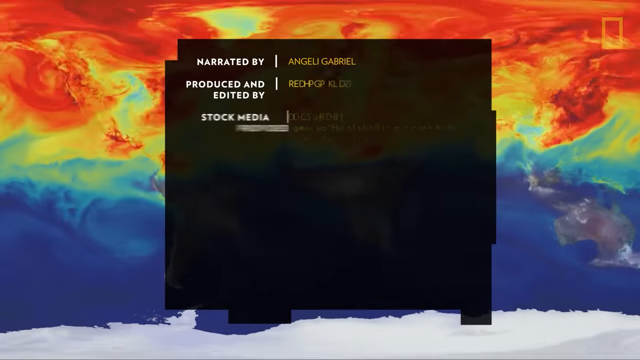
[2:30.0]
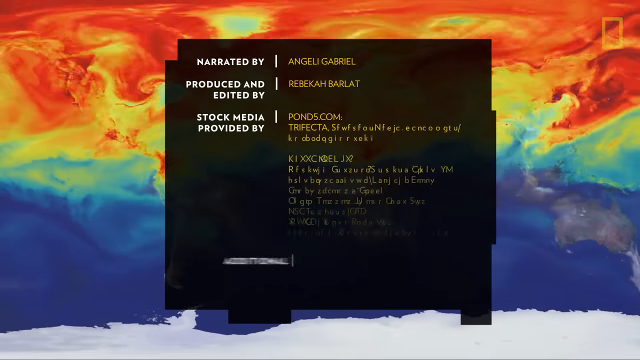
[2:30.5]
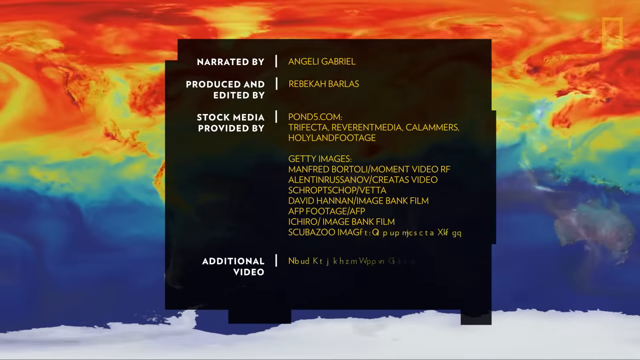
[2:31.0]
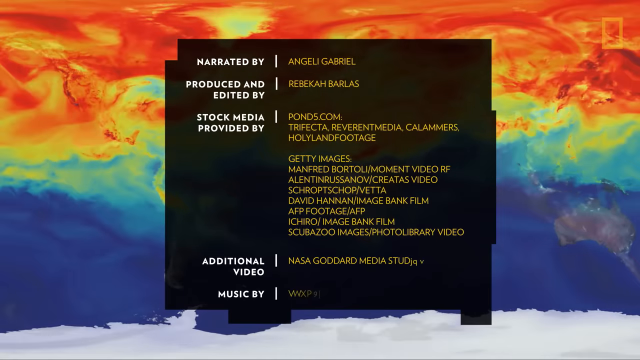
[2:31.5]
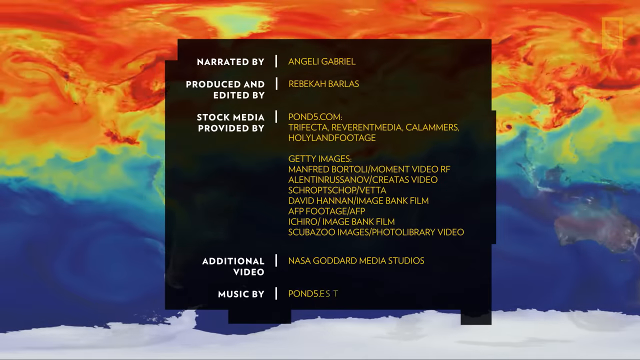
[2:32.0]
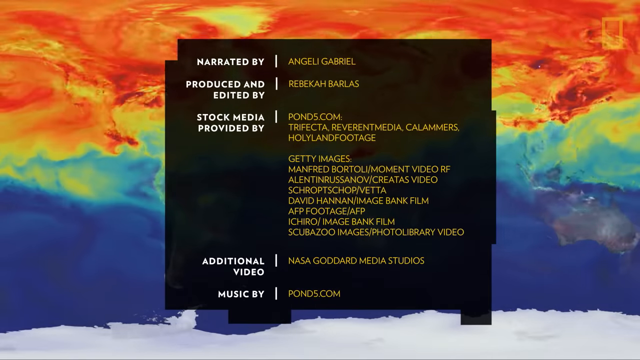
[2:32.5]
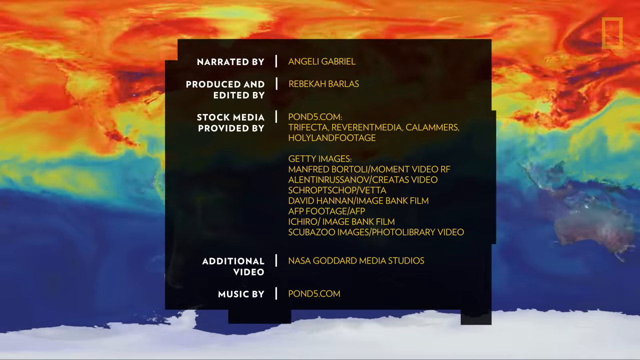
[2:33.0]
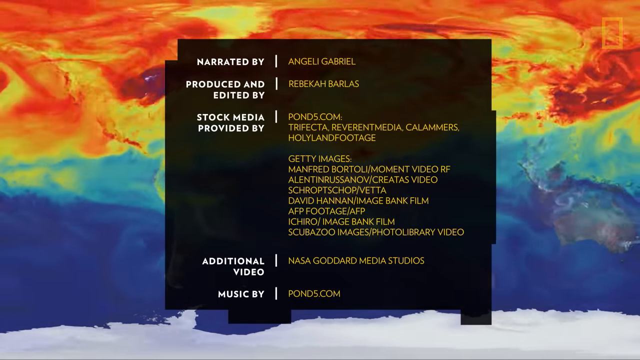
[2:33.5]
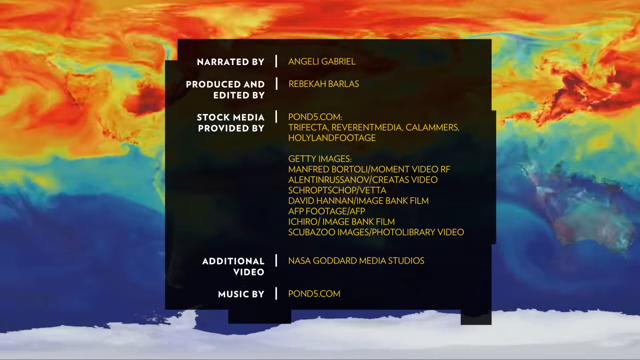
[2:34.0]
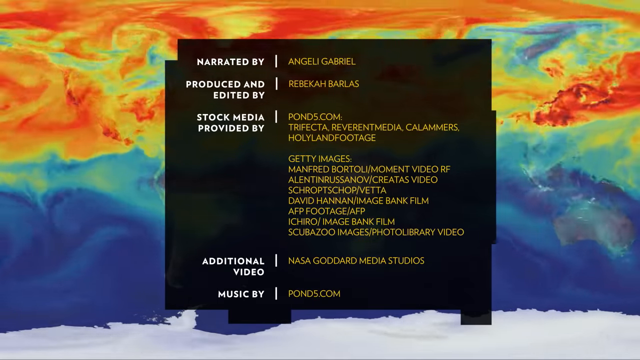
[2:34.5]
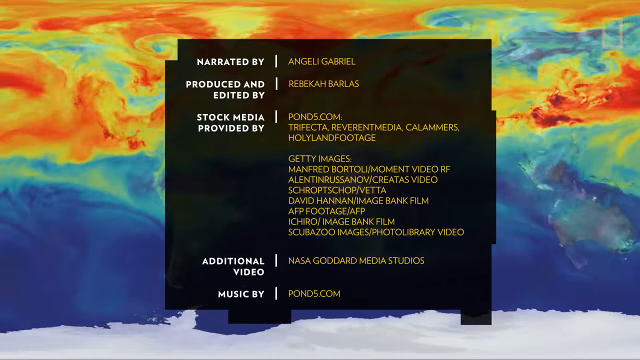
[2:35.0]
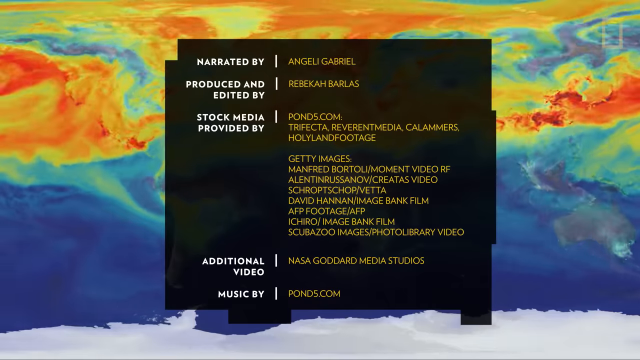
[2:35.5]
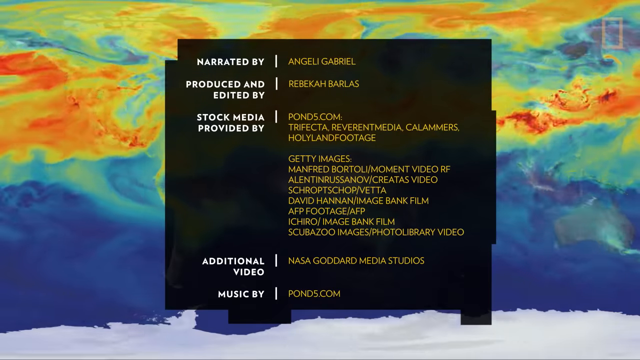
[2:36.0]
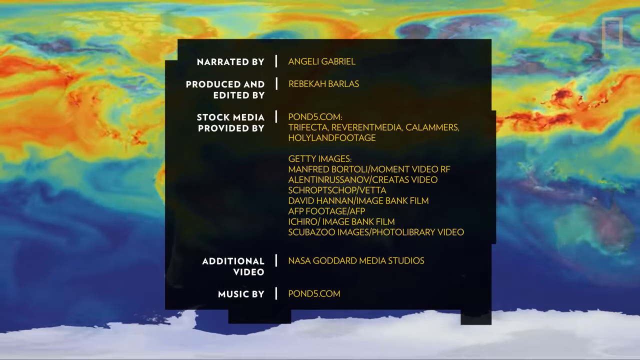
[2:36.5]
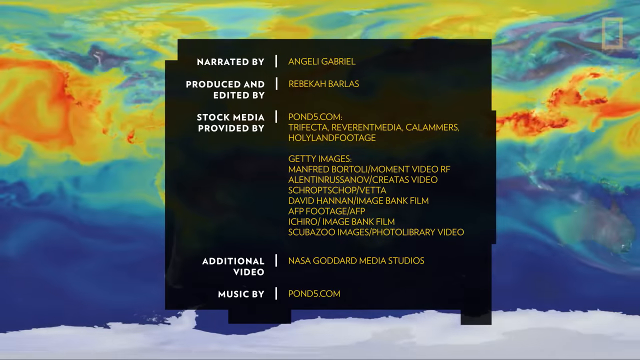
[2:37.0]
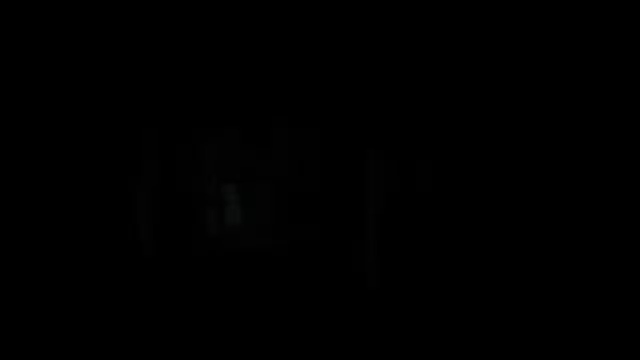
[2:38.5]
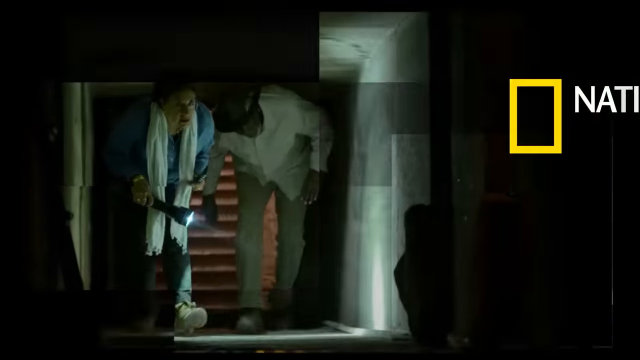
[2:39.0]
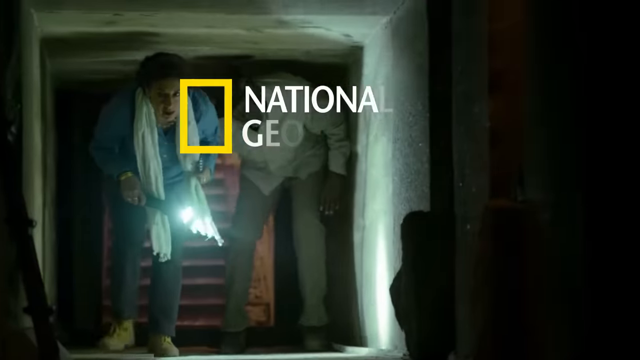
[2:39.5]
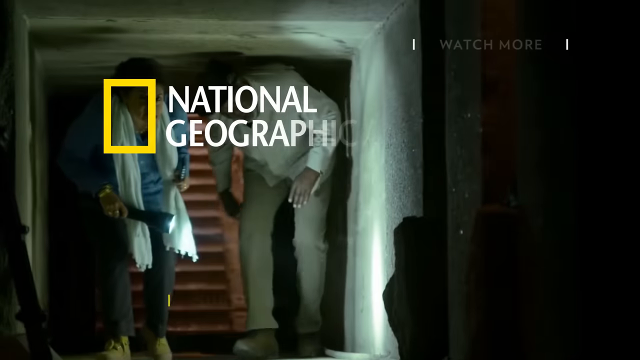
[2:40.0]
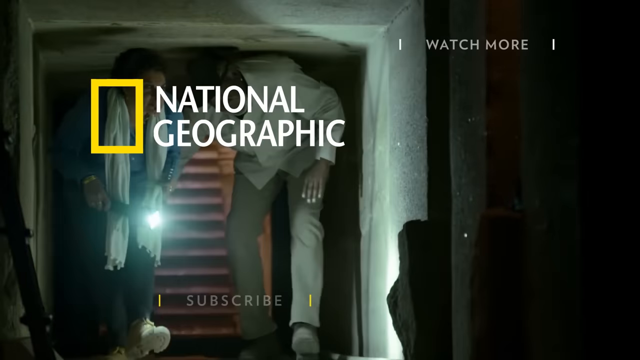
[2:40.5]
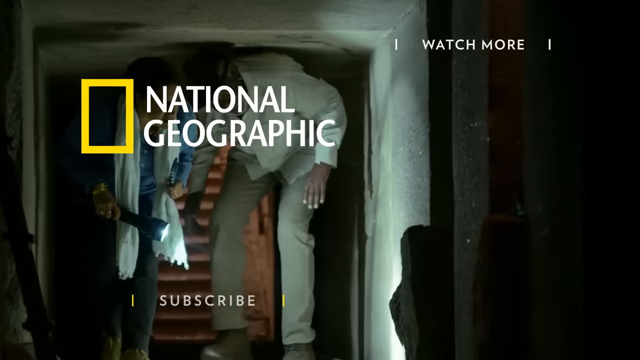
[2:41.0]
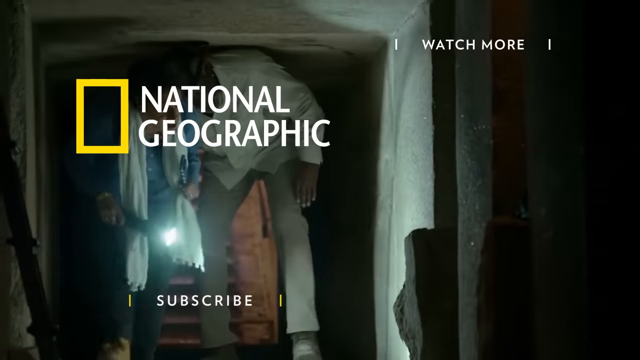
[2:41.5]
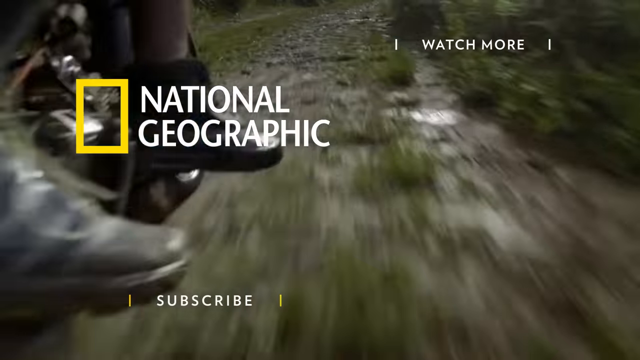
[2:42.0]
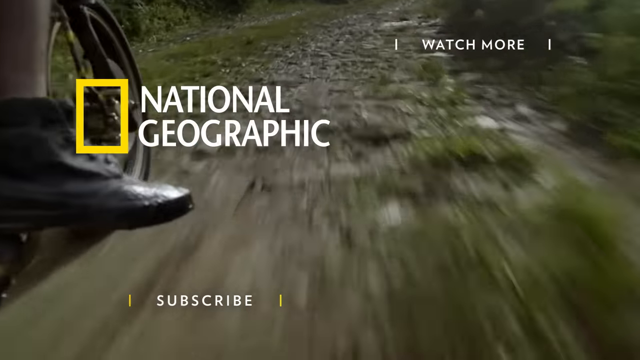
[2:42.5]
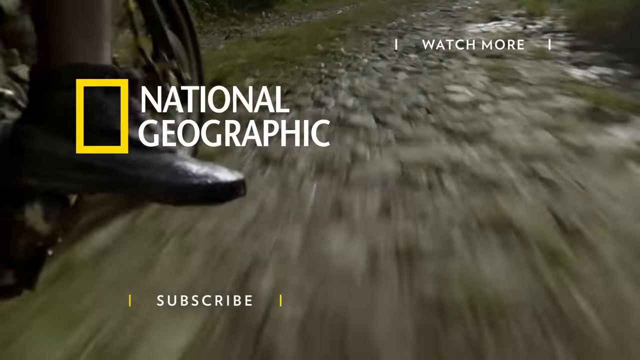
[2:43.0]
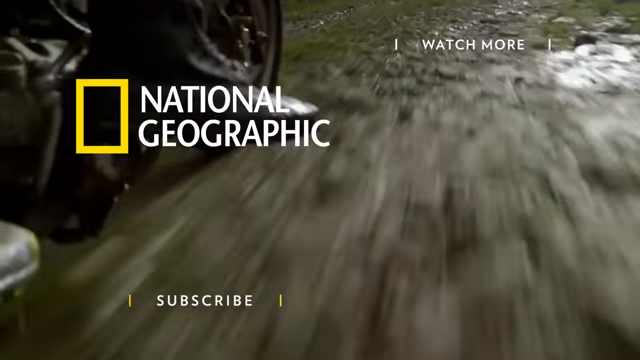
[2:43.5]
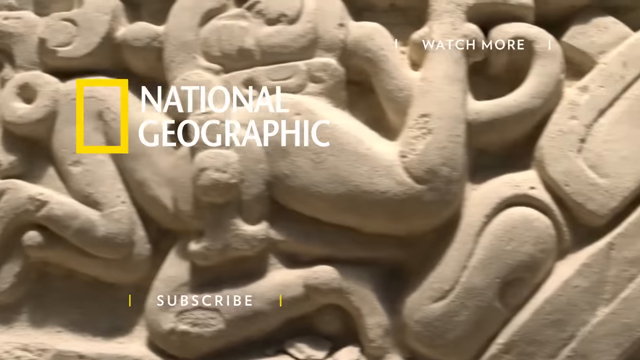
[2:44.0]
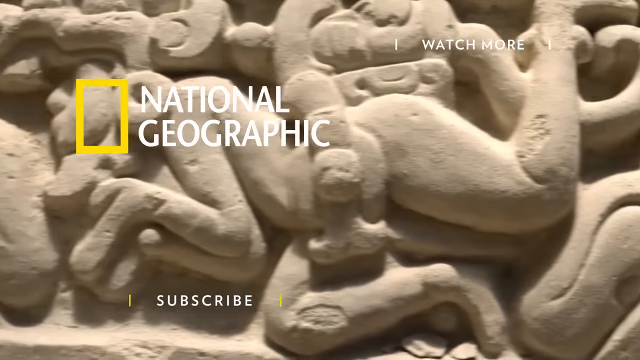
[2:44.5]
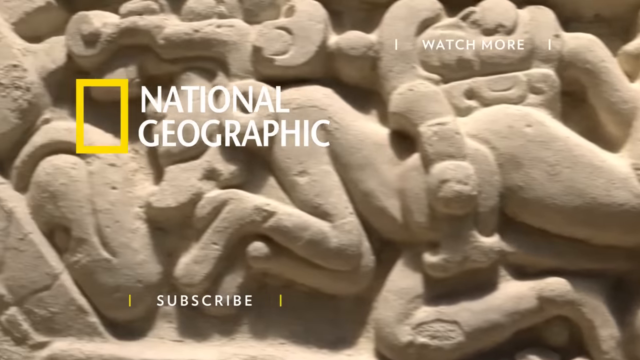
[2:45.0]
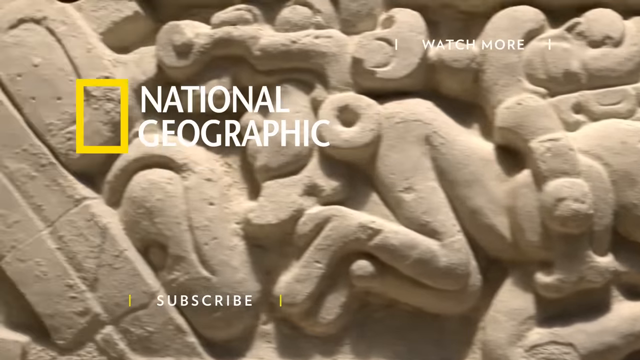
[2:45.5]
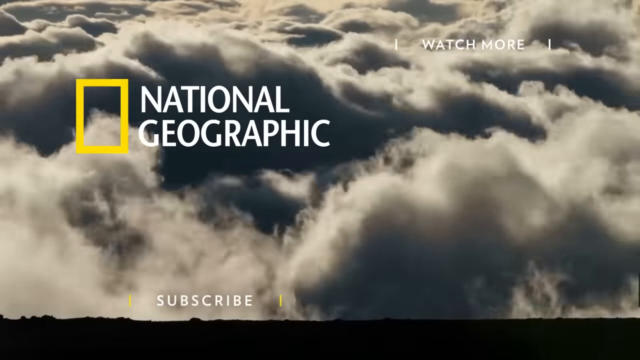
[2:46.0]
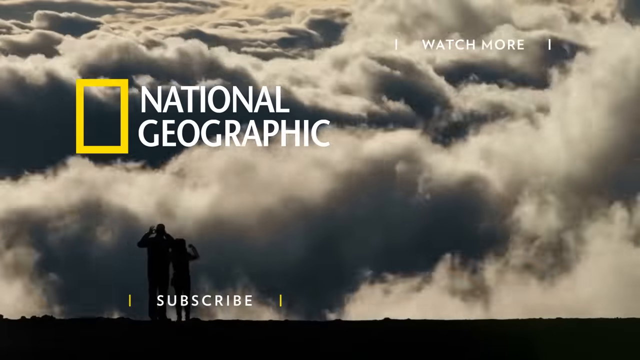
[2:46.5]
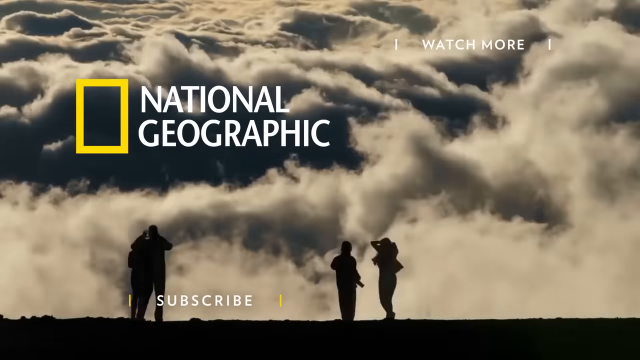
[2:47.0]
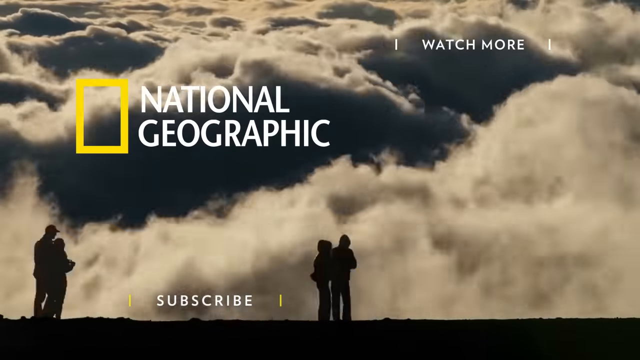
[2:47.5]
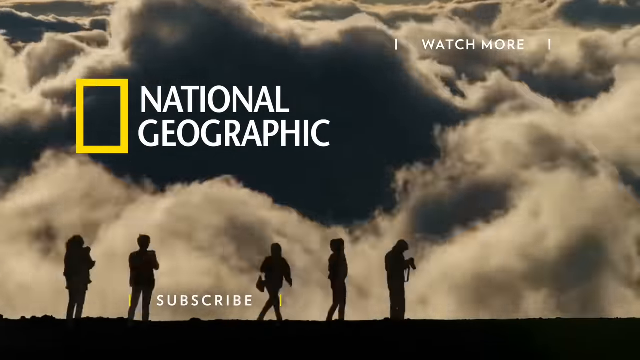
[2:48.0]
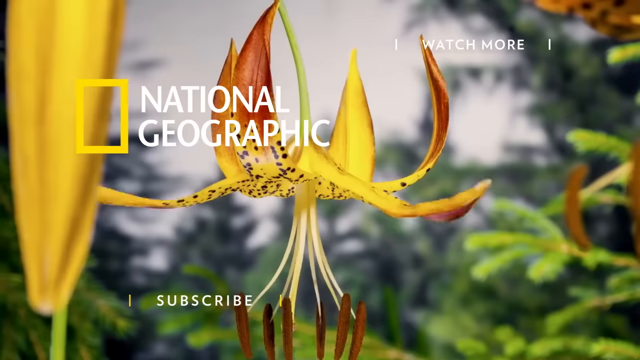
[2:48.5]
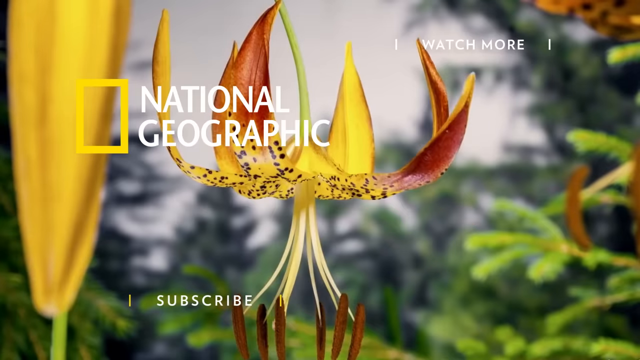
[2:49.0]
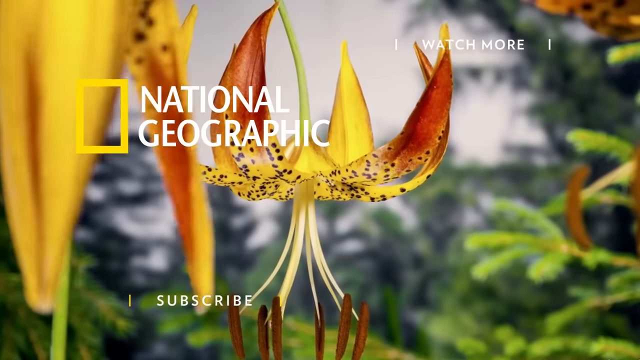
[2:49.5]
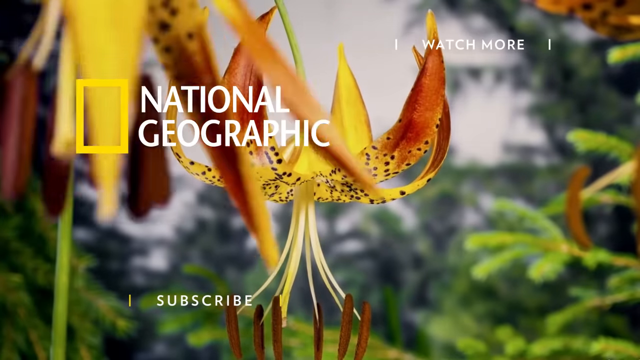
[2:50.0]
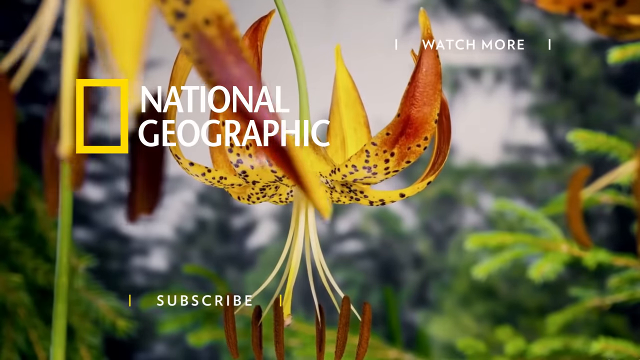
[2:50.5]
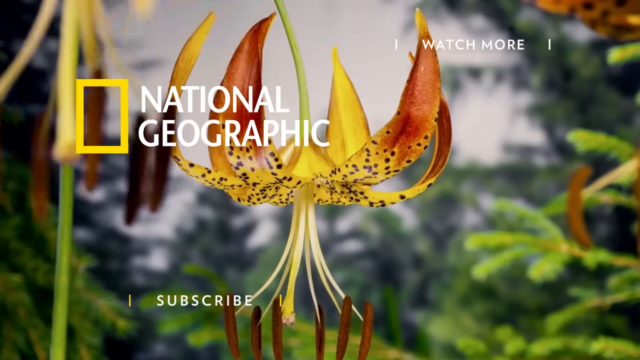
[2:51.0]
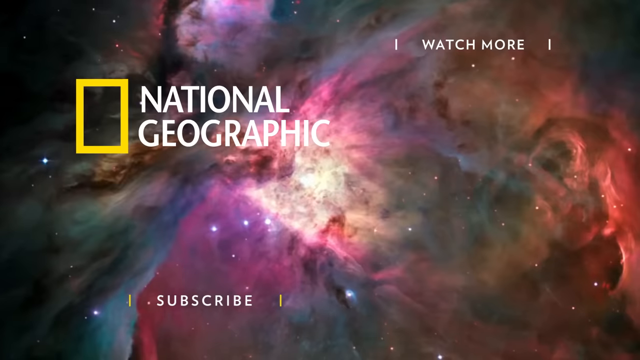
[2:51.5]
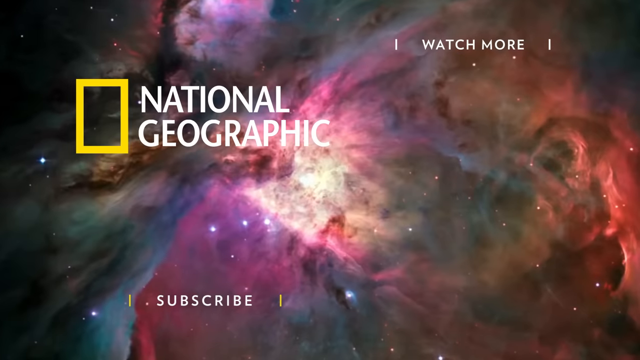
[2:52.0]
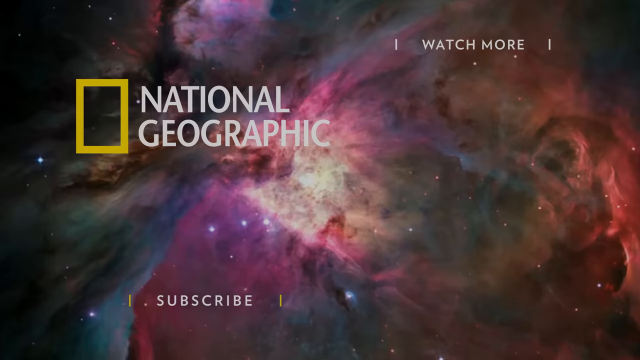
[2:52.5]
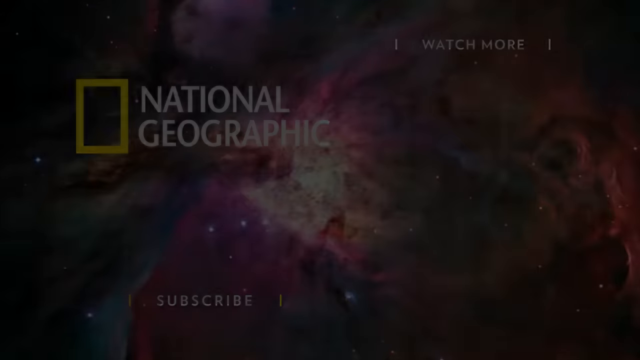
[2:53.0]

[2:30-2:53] The background looks almost like a heat map of air, with swirls of different colors: red and orange at the top, shifting lower down into yellows and oranges, then greens and oranges, then blues and greens toward the bottom, and darker blues still. Overlaid in the center are the credits in a black rectangle. On the left are the labels "narrated by," "produced and edited by," "stock media provided by" and "additional video music by," with many names in gold text along the right-hand side. The video then moves to what looks like maybe some sort of cave, with a person wearing white emerging toward the camera. Overlaid on top is the National Geographic logo in yellow on the left, with "National Geographic" in all capitals.